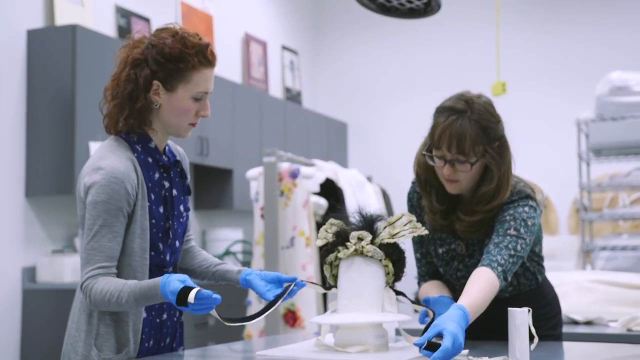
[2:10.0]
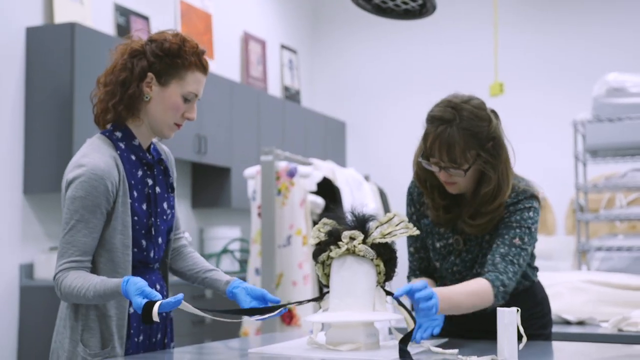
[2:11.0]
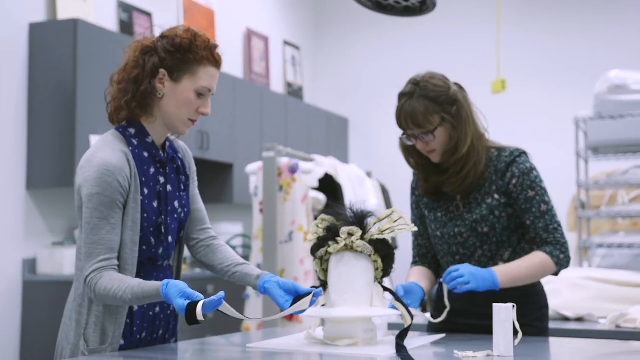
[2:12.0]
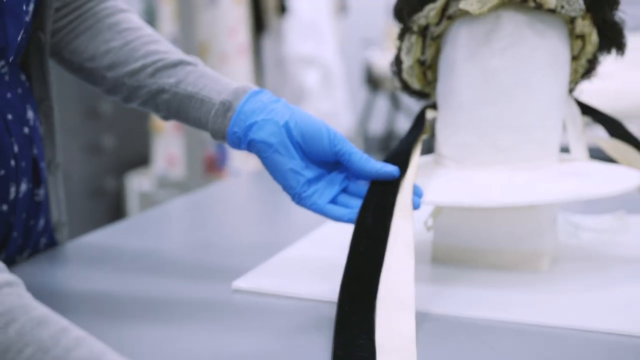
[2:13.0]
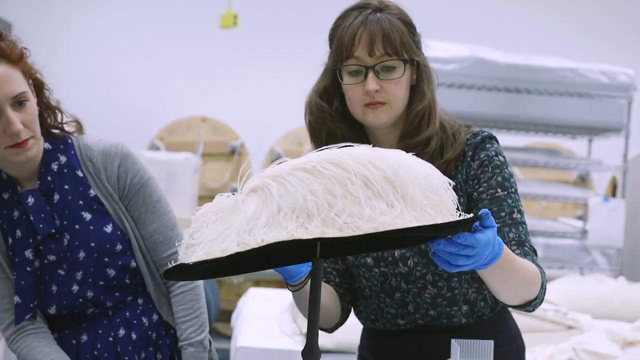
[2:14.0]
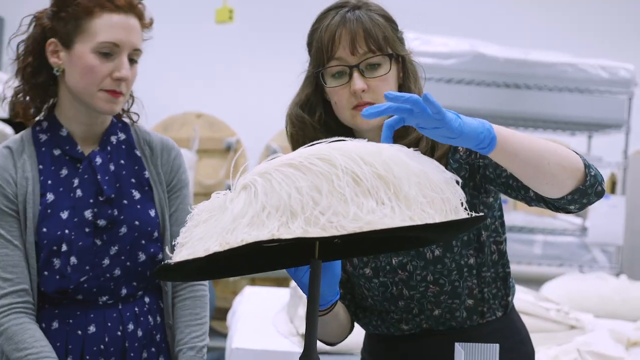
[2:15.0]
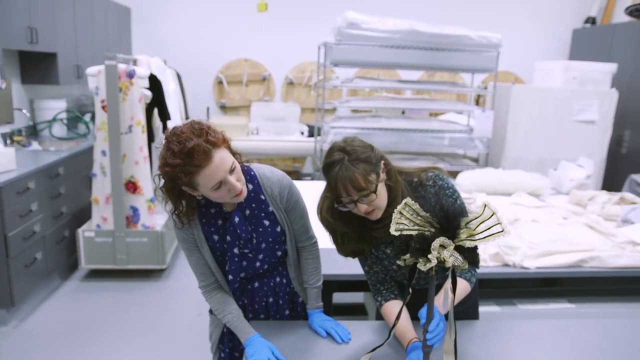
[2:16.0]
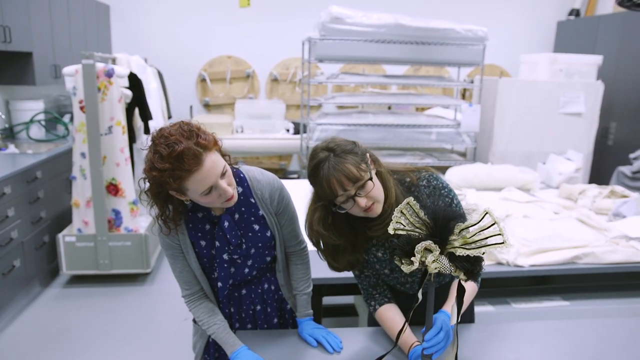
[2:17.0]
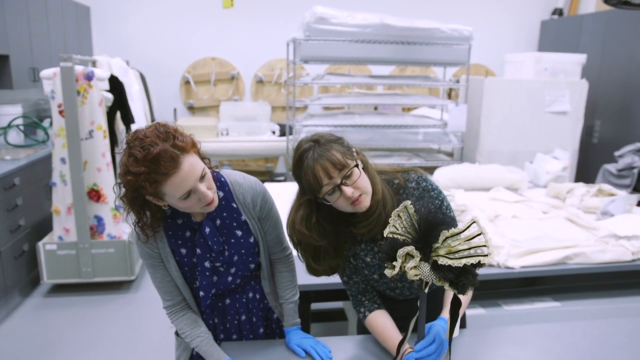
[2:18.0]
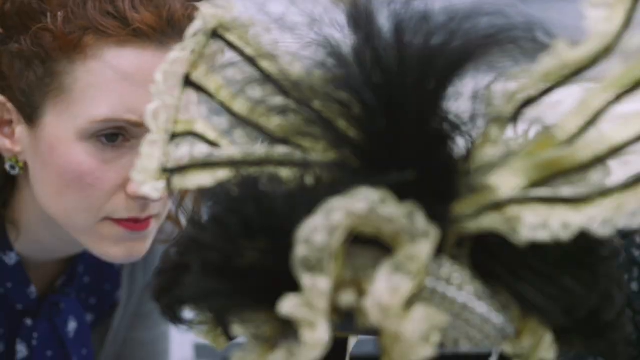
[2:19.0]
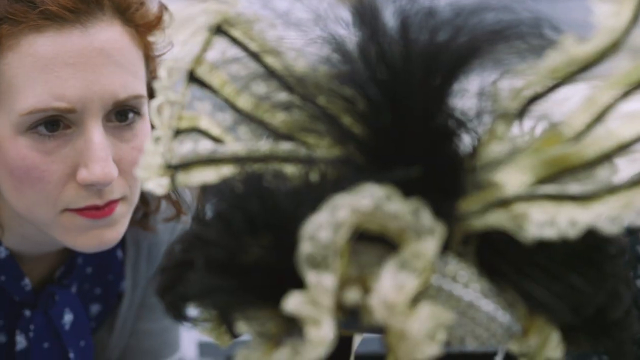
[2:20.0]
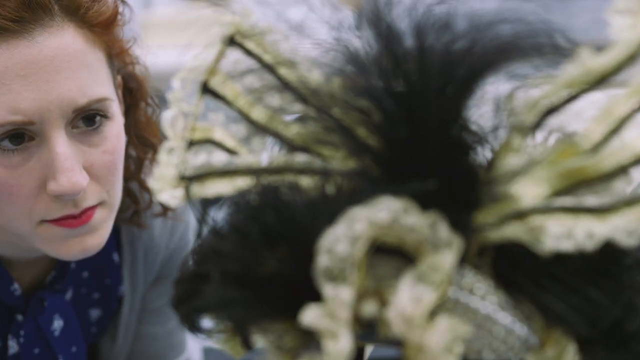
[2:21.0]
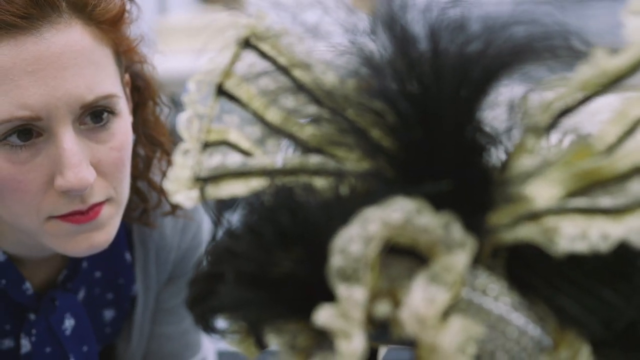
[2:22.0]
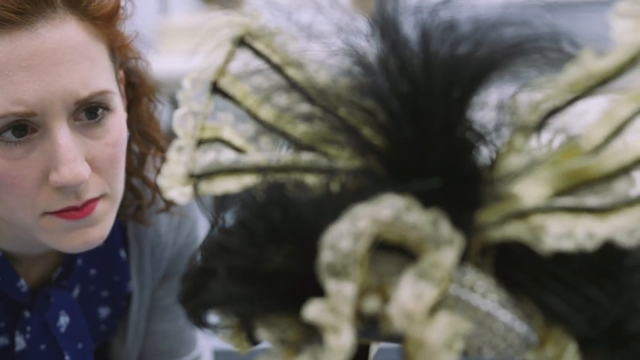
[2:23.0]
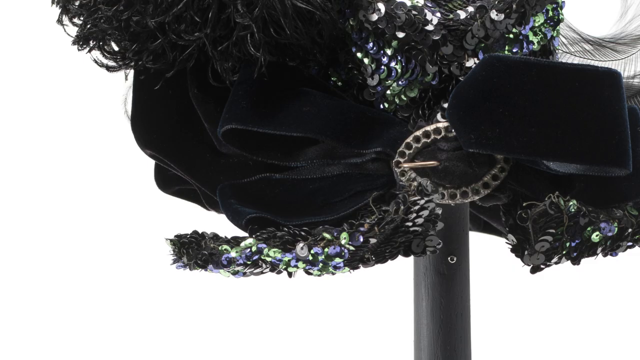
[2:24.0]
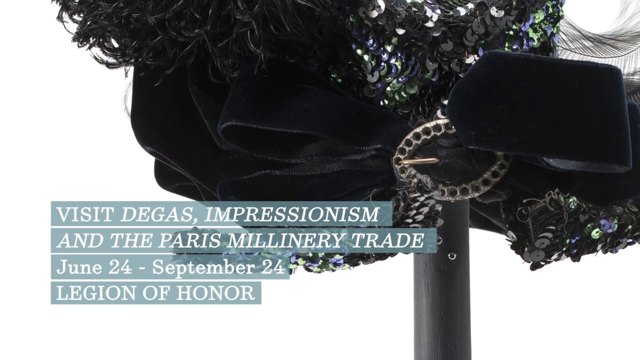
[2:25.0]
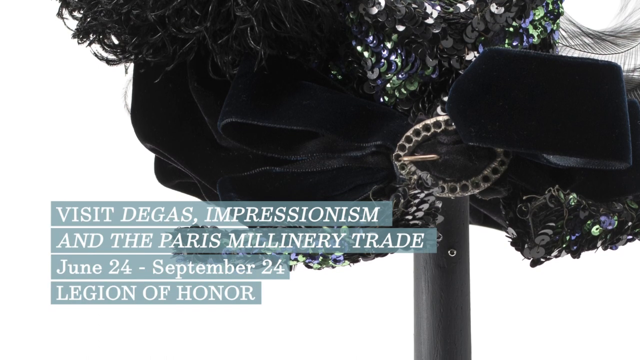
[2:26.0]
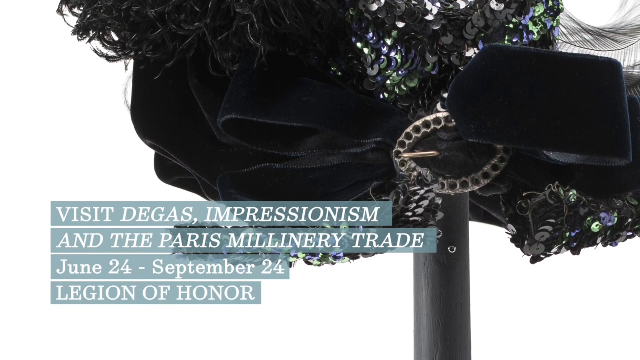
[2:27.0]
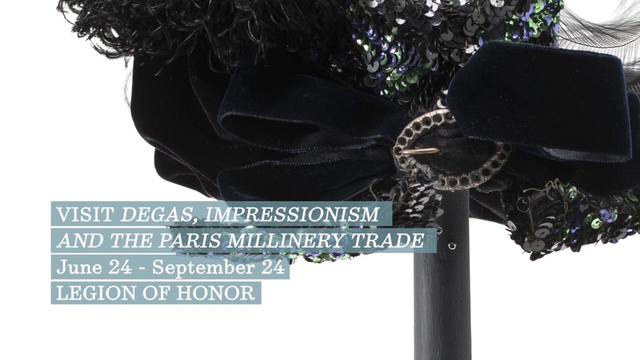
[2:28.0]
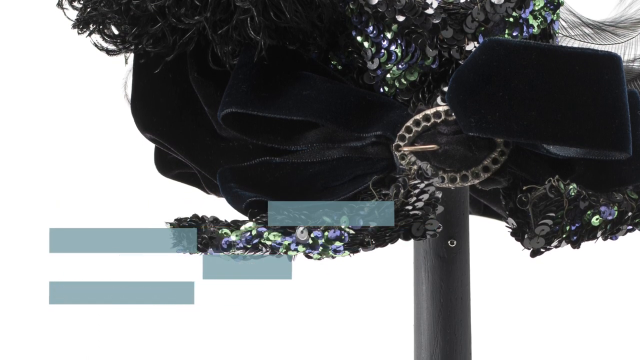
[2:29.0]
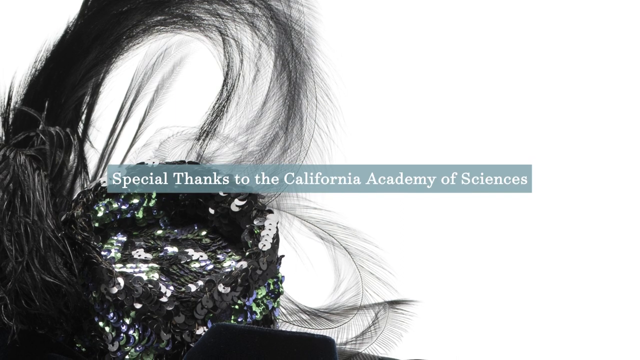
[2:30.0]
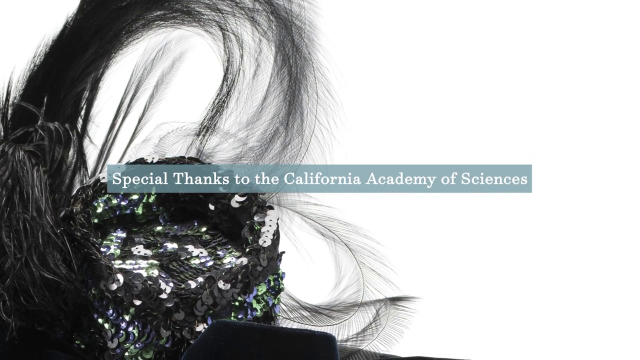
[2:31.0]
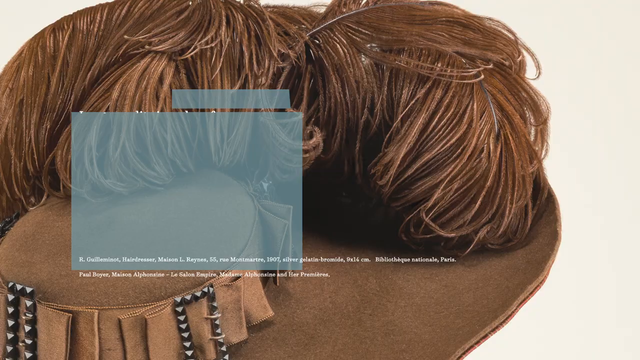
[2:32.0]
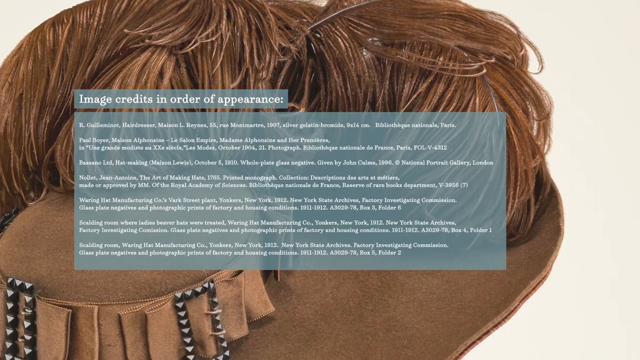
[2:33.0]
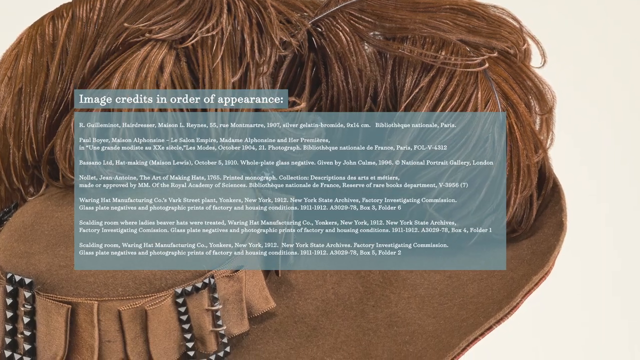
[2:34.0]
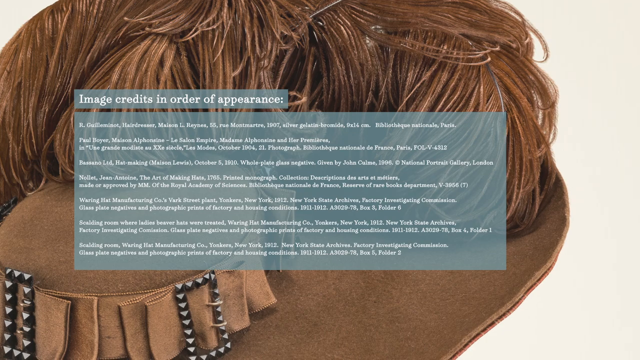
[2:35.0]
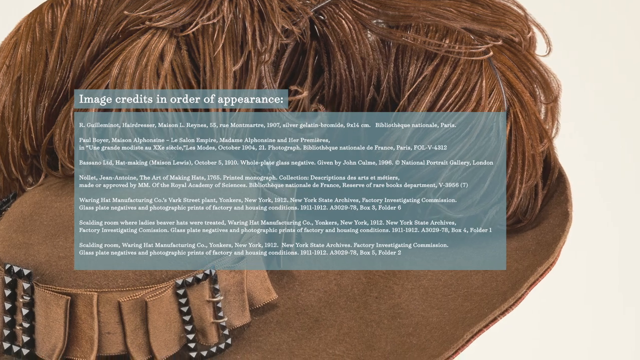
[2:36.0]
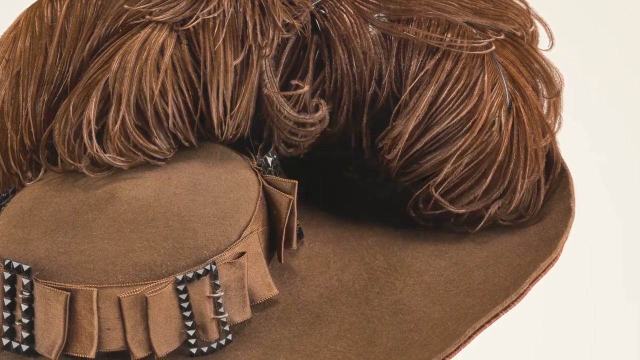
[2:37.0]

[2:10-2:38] The same two women examine another hat and place it on a model head to examine it further. This hat has a trail of black and white ribbons. Another hat on a stand has feathers on it. A third hat on a stand is made of uncertain materials that look very fine and lace-like, in a combination of black and white stripes. It then cuts to a picture of the black hat with sequins on the side, with text reading "Visit Degas' Impressionism and the Paris Millenary Trade, June 24 to September 28, Legion of Honor." Text follows with "Special thanks to the California Academy of Sciences" and the image credits in order of appearance, a whole list crediting the collection of images used. In the background is a leather hat with black strings on it.